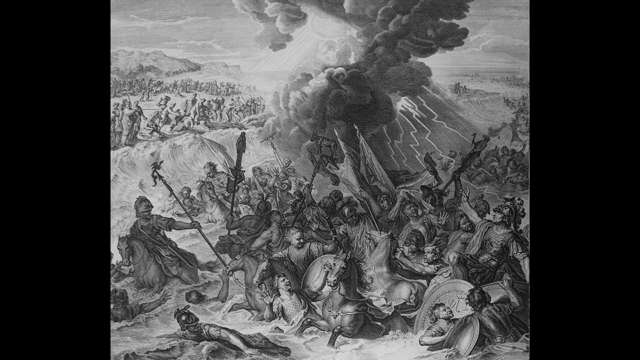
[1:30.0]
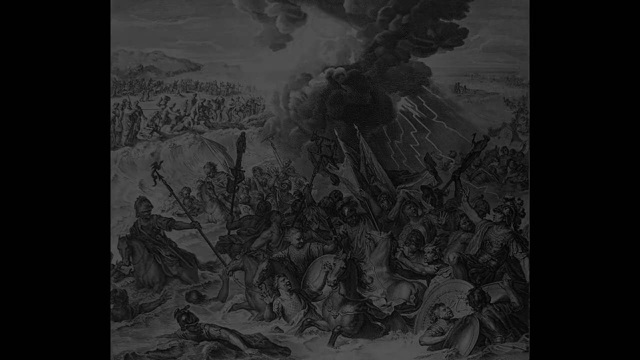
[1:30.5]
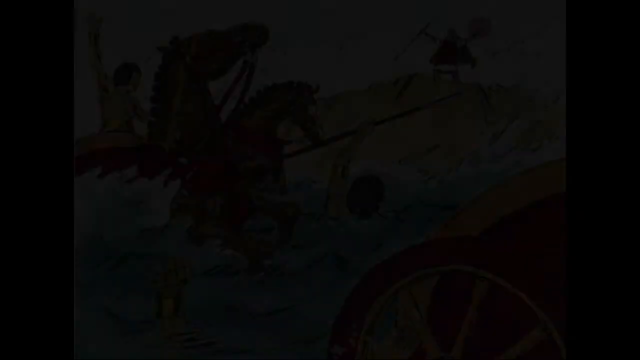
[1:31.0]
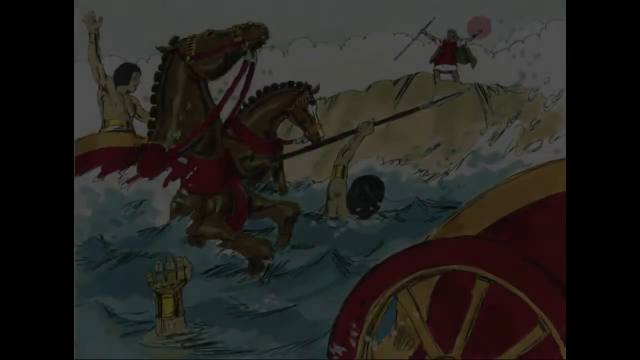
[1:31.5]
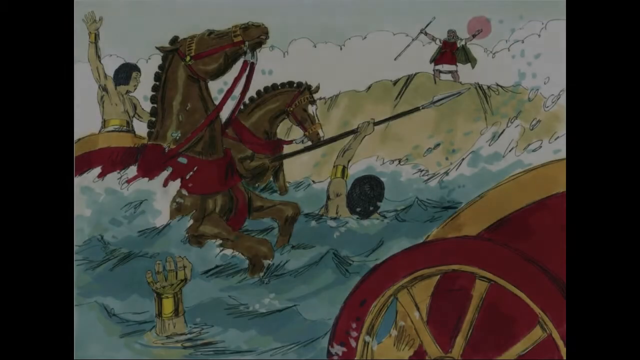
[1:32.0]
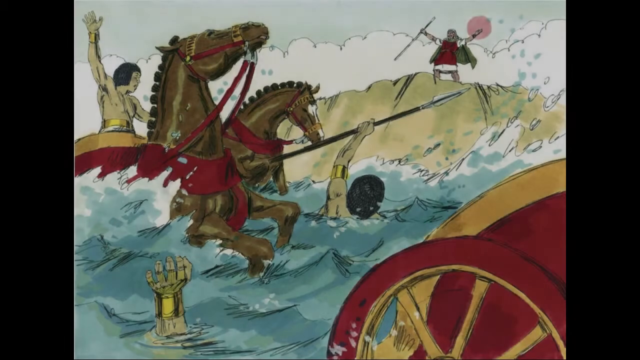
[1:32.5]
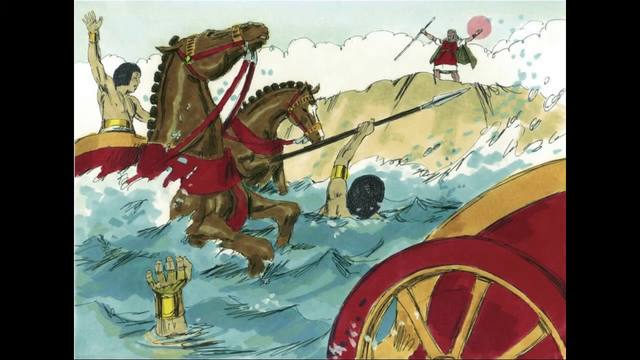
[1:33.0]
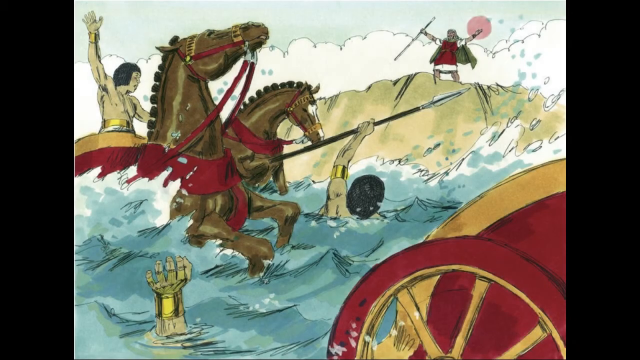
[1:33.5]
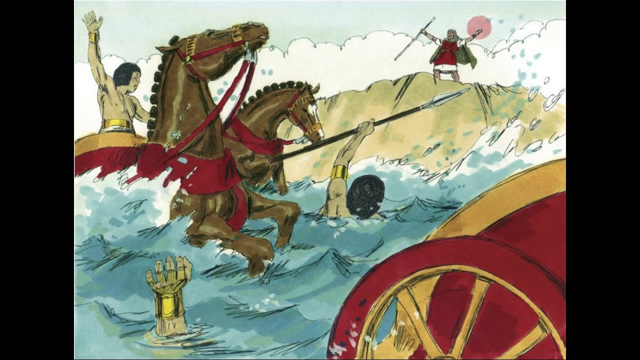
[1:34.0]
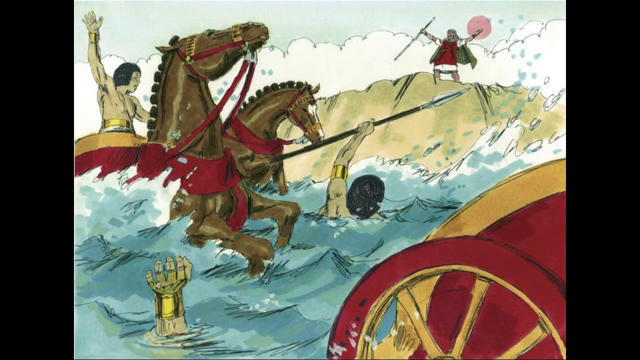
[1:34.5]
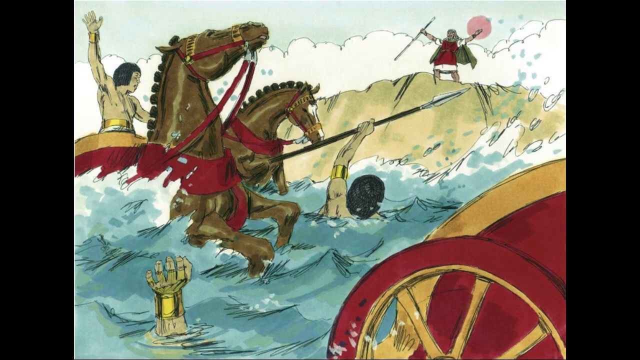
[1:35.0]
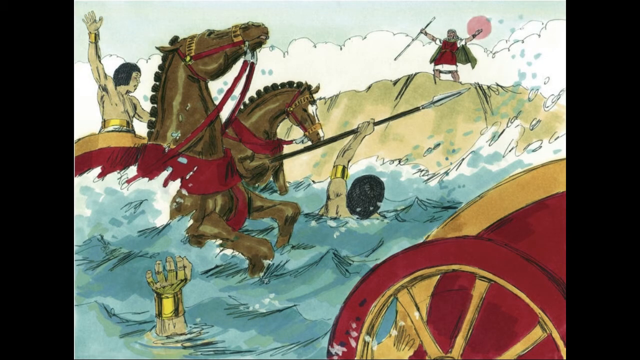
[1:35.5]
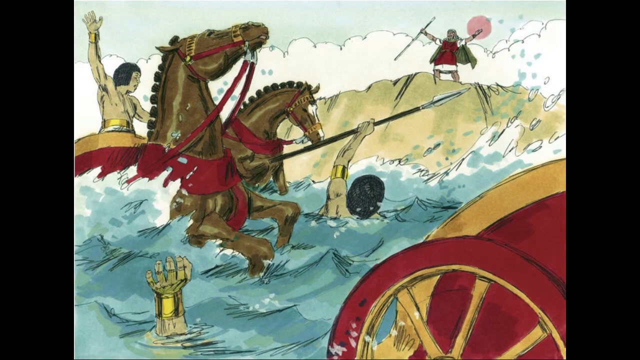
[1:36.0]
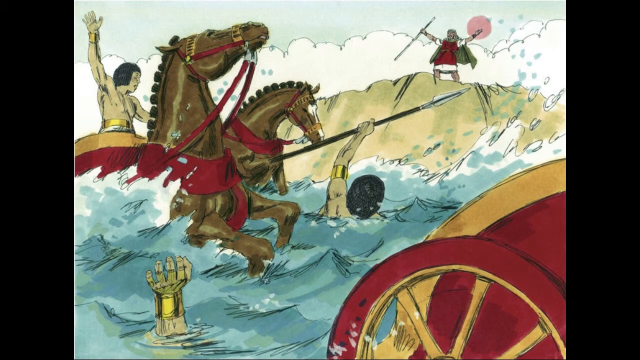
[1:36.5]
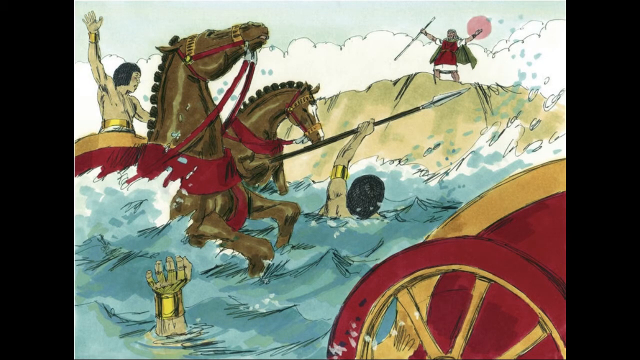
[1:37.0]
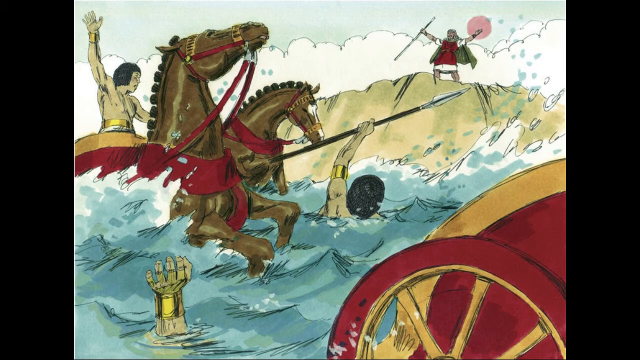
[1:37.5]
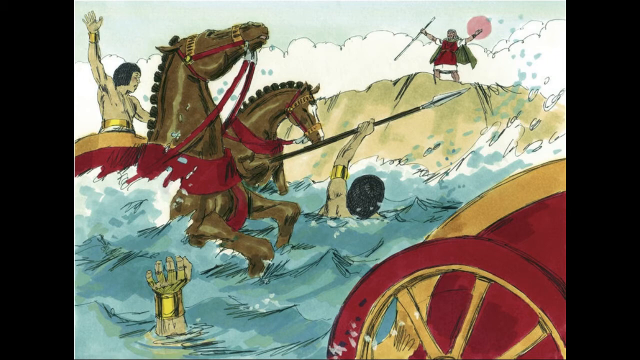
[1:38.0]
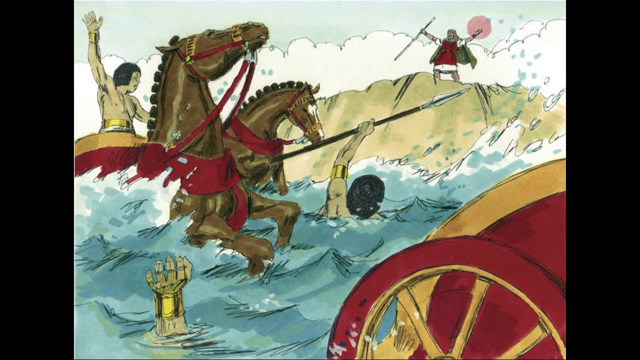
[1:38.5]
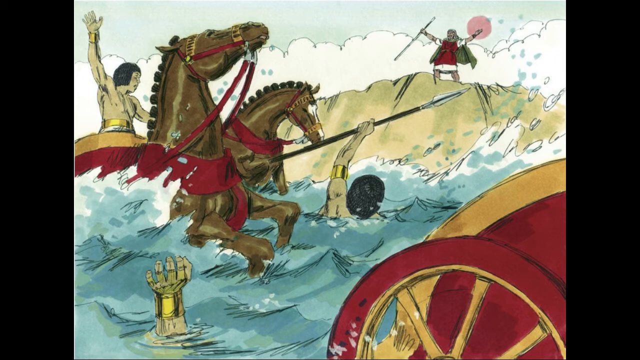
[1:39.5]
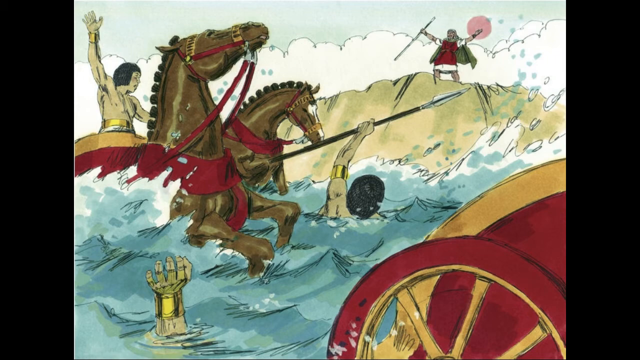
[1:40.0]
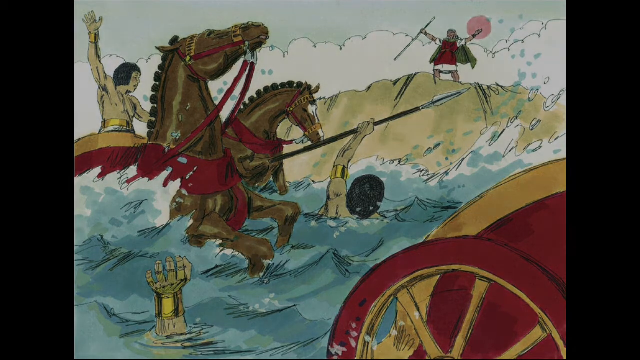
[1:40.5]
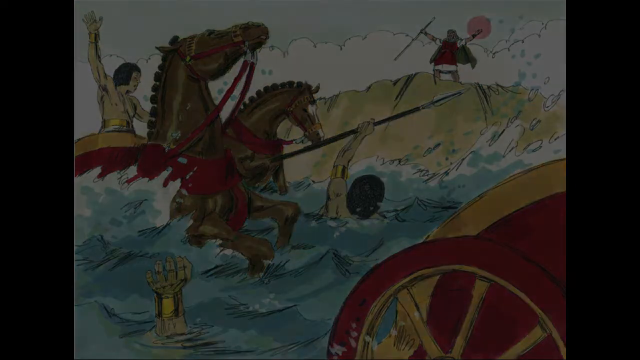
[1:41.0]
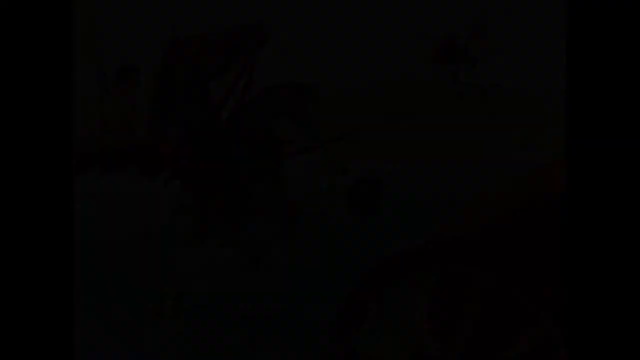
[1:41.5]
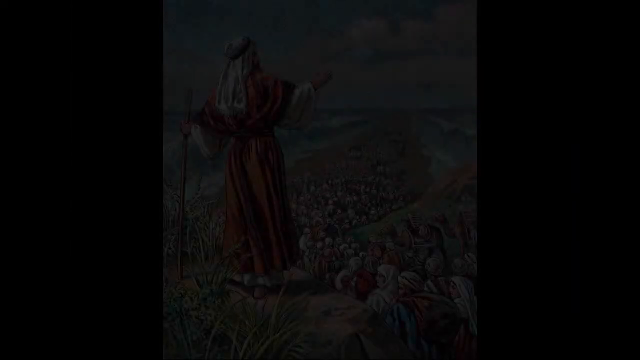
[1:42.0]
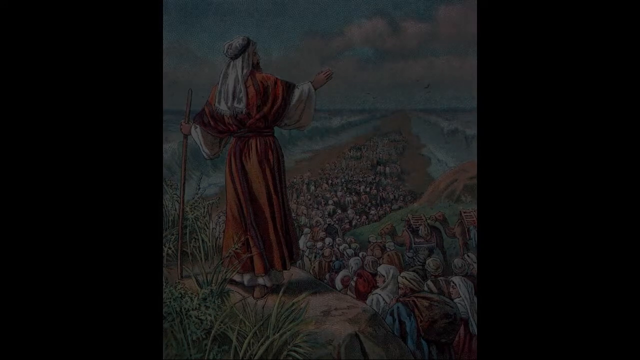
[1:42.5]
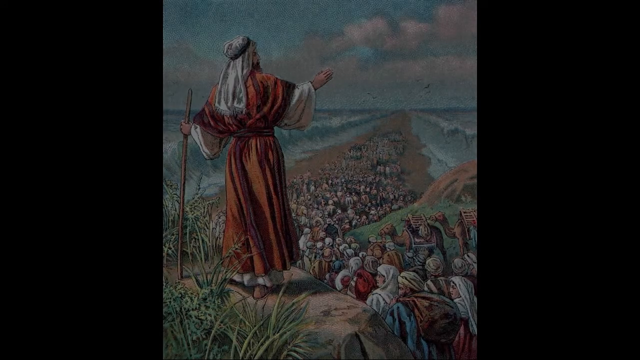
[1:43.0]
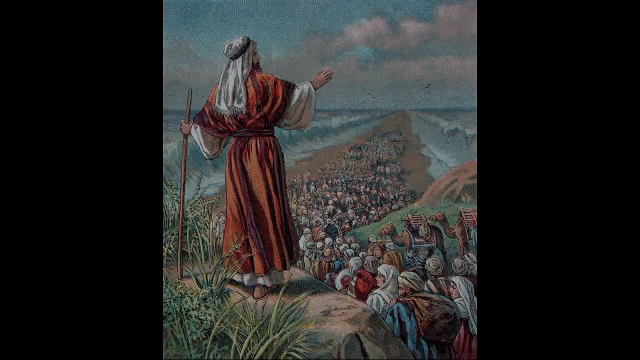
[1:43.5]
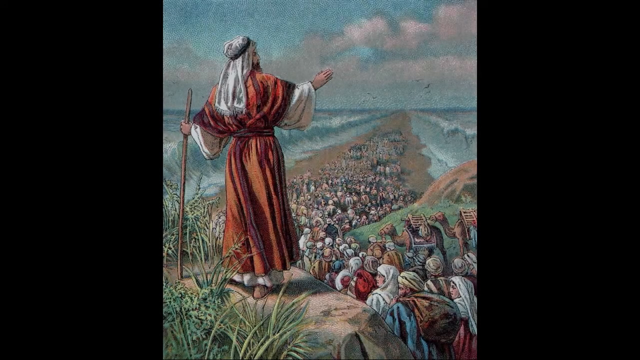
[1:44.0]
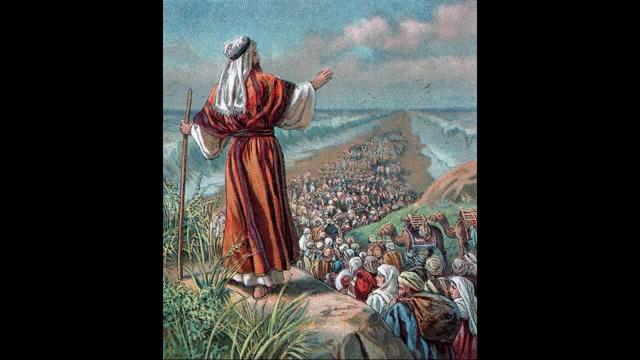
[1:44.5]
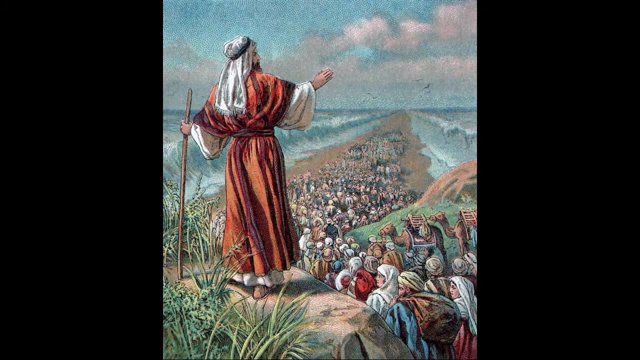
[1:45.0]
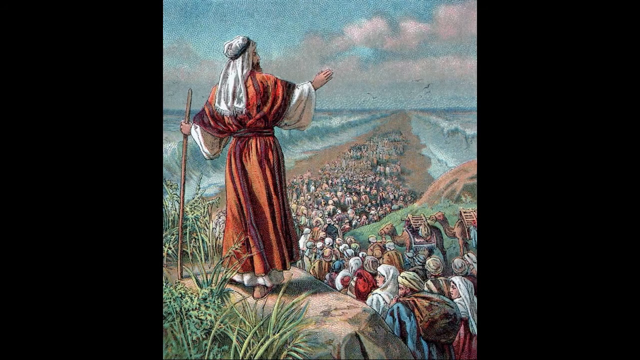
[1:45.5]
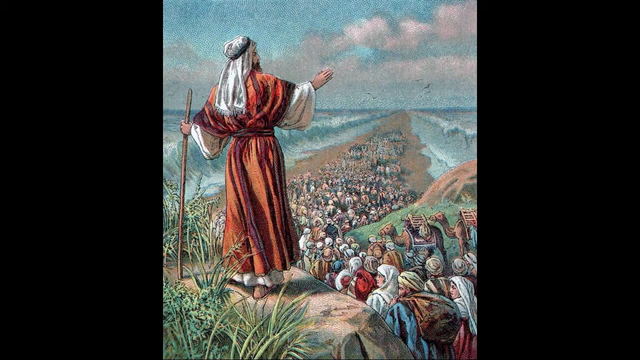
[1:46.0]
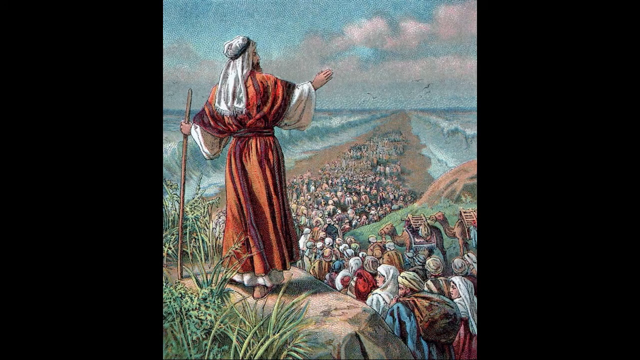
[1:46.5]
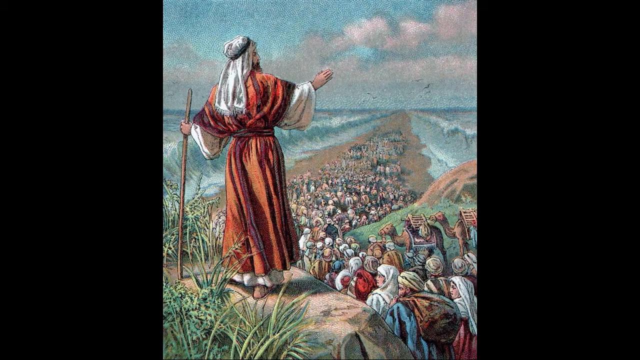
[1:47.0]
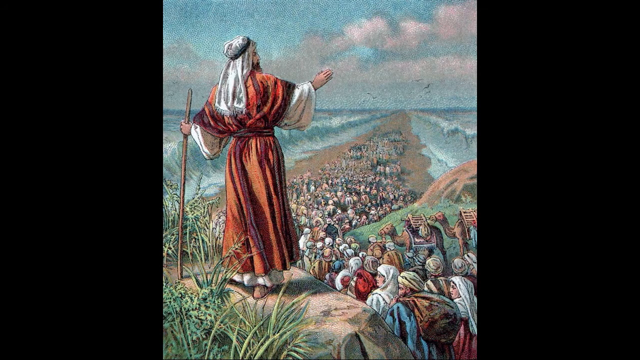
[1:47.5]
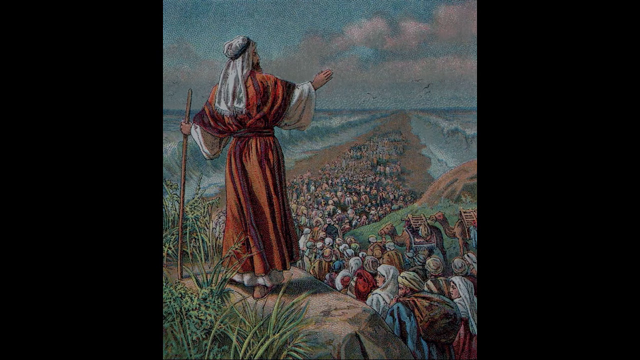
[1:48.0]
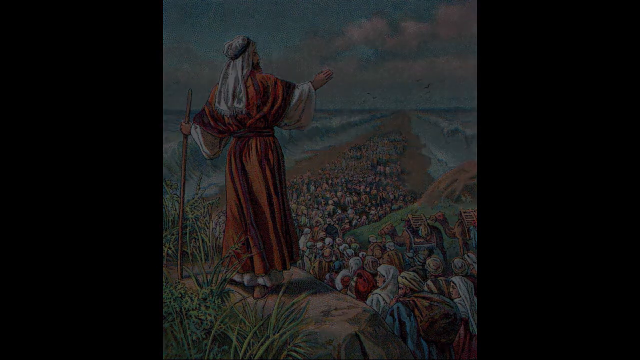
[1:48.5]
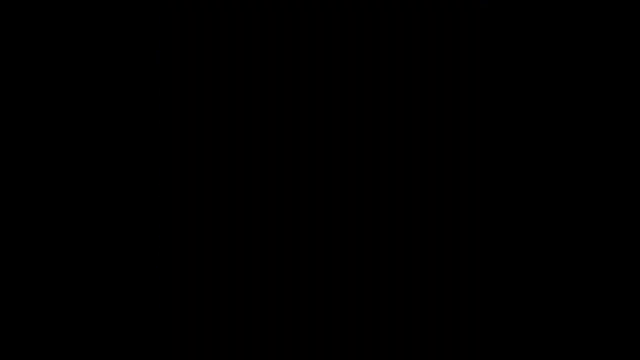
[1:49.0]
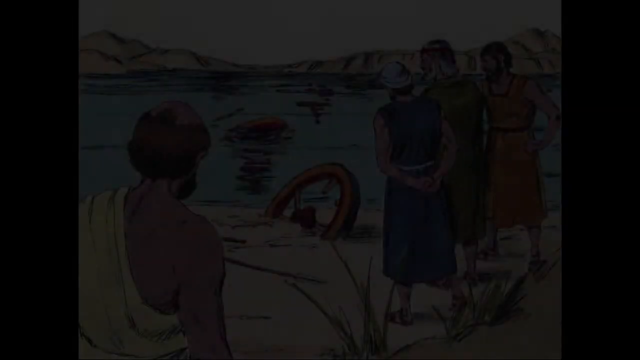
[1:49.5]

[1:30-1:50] There is a lot of water, and everyone is sinking in it, including horses and men. A person stands on a big stone while many people watch others coming between the water. Next, the scene seems to be a war zone with many fires and people holding different kinds of weapons, in what looks like a wild situation. The culture seems very old, with no modern technology visible, only animals such as horses, and knives.